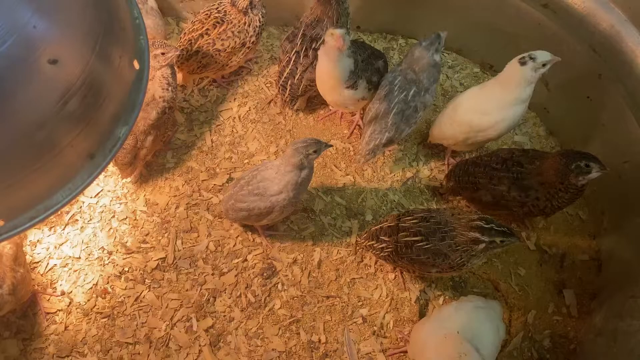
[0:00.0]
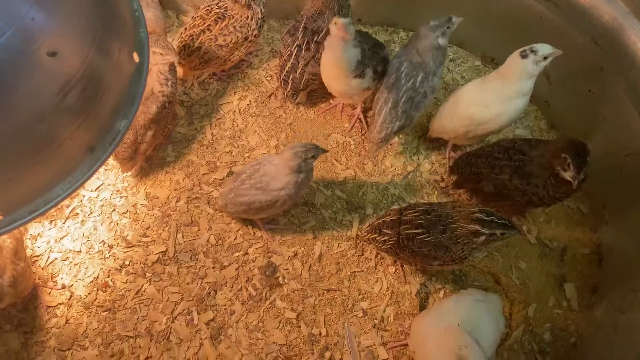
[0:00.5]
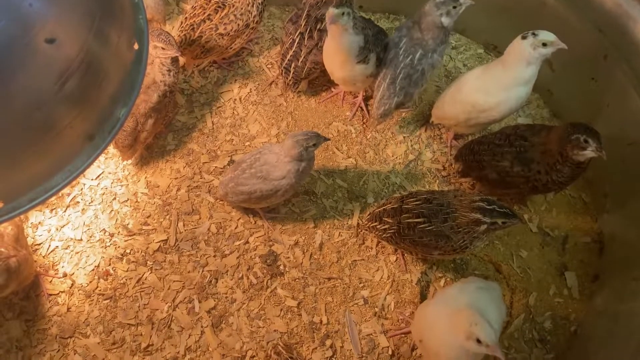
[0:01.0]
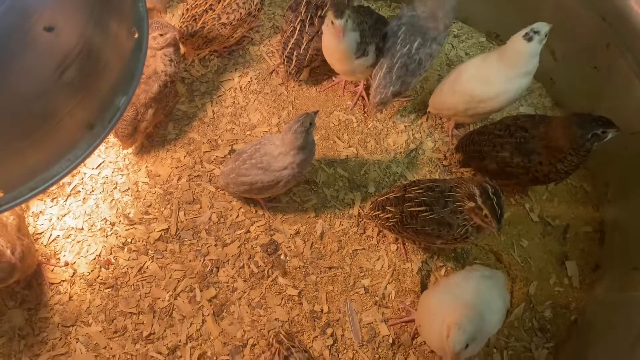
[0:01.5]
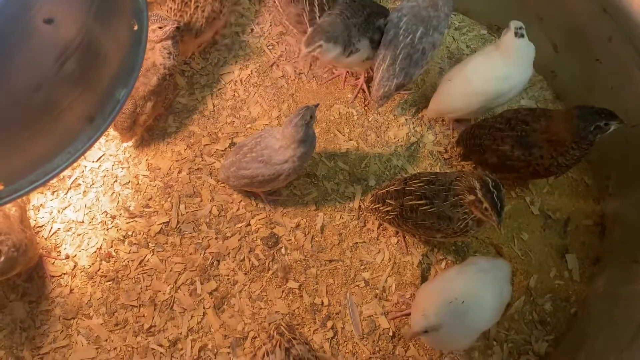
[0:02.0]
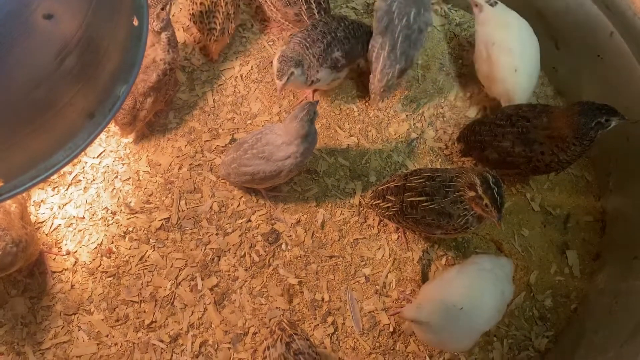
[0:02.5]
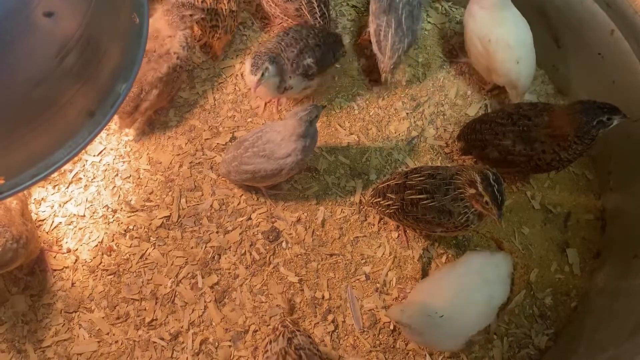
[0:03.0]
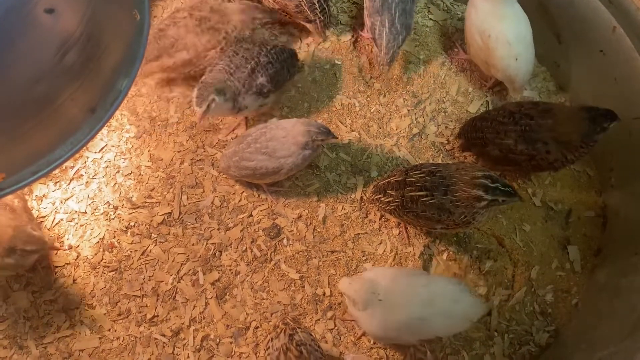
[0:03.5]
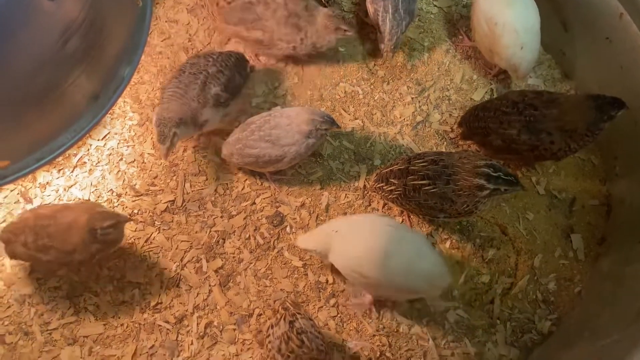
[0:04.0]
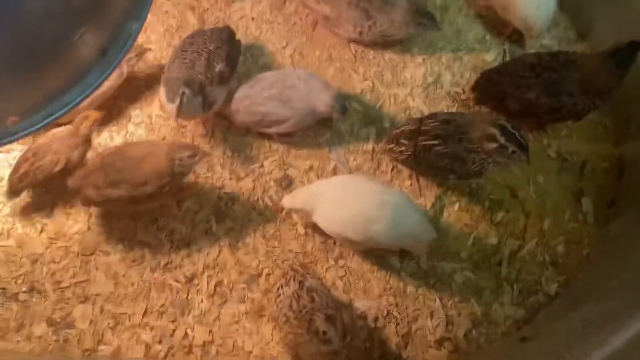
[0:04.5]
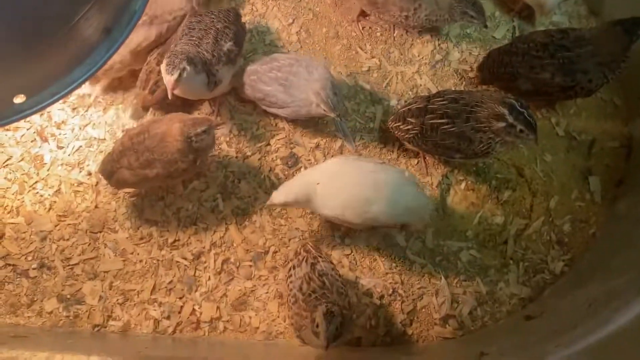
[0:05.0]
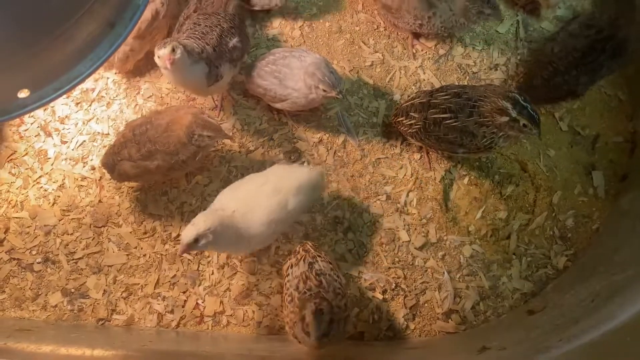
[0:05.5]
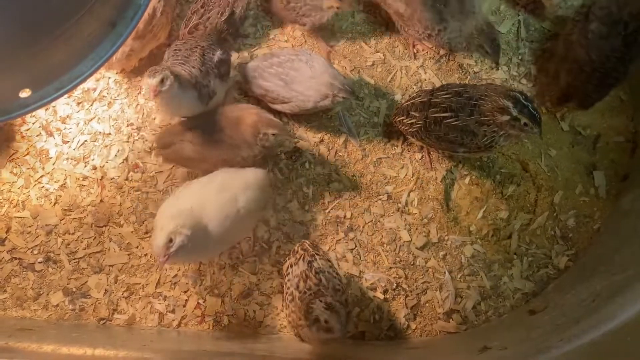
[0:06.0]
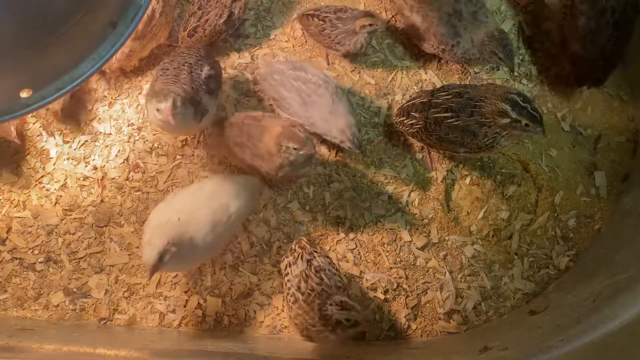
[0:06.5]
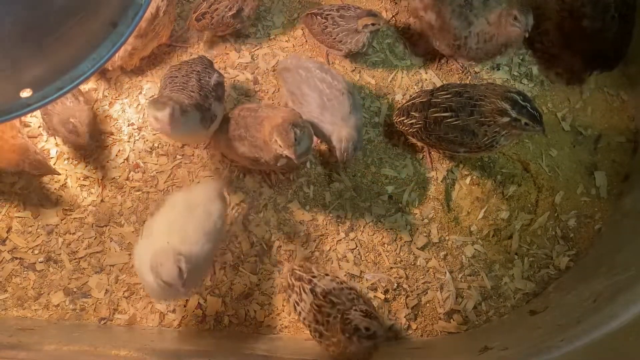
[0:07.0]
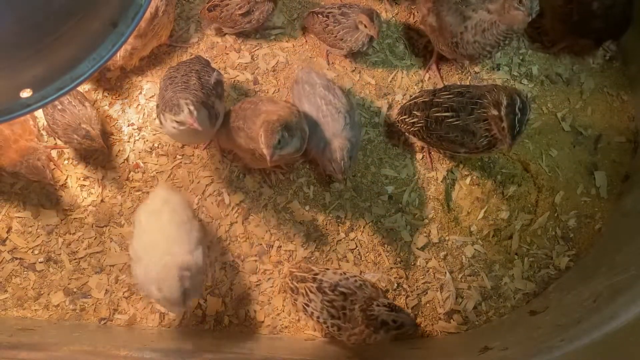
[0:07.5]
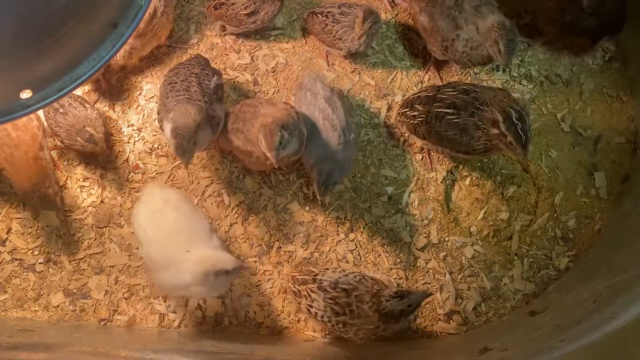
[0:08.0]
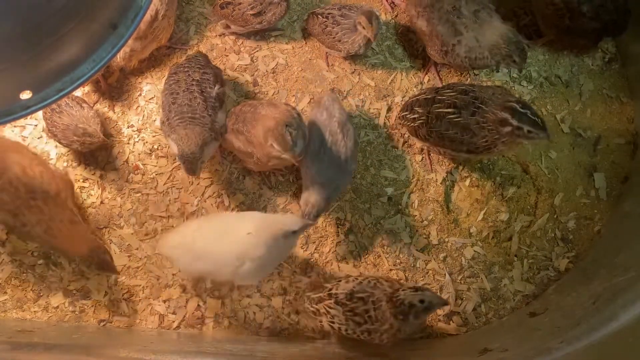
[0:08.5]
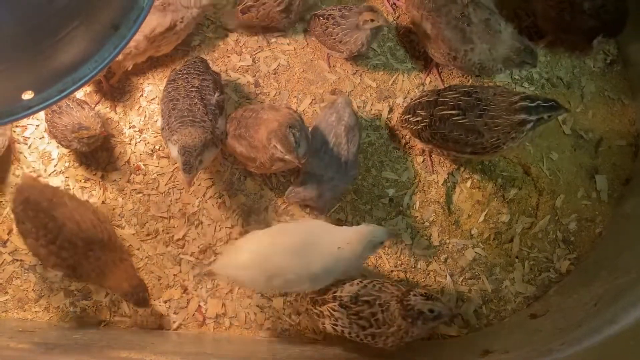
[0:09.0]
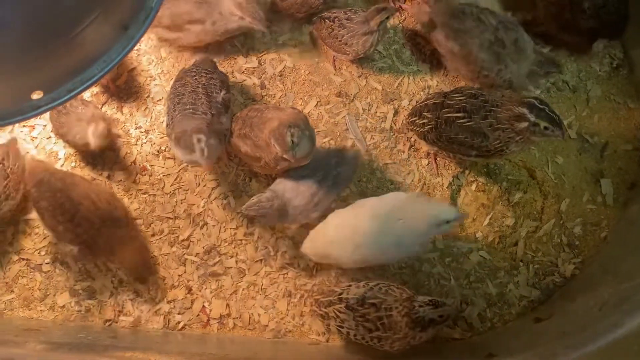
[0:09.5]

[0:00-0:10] Some baby chicks, not tiny but certainly not fully grown, stand on a bed of sawdust in a bowl with wood chips and sawdust at the bottom, lit by a bright light. A metal light frame is visible on the left. There are about 10 little baby birds: most are mottled brown, one is white, and some are a lighter, grey-brown colour. They stand in various orientations and appear to be in a big bowl, the edge of which is visible in the top right corner, and they look up at the camera. The white one has a little dark patch on its head, and another has a white belly and darker wings.